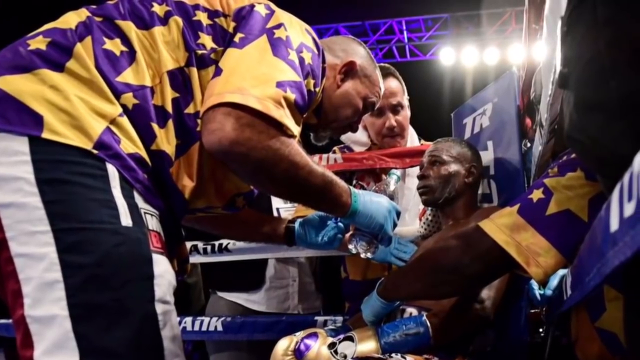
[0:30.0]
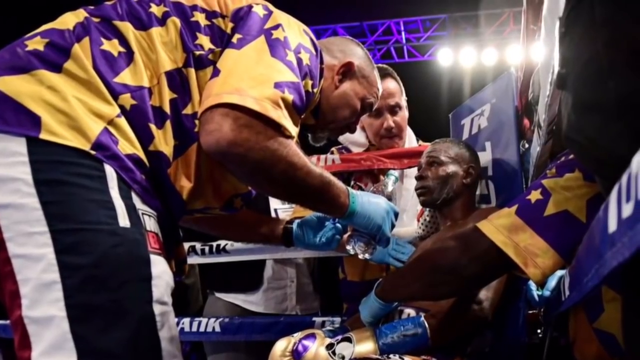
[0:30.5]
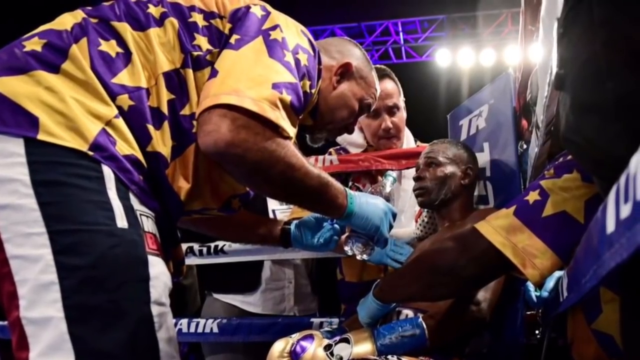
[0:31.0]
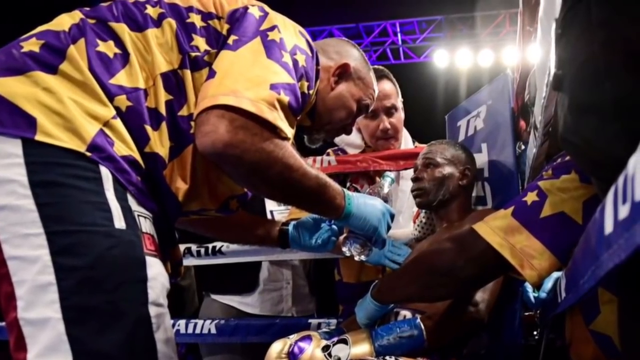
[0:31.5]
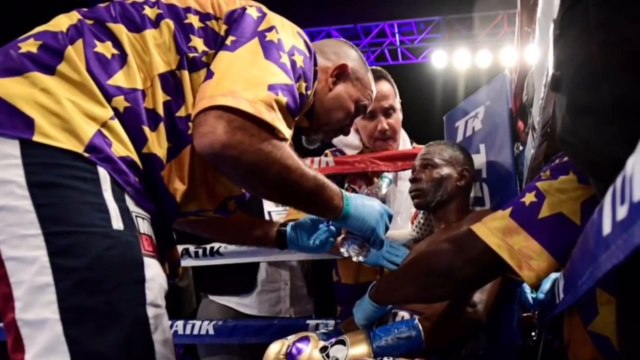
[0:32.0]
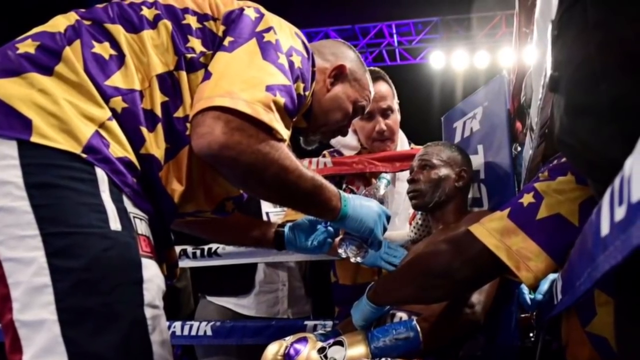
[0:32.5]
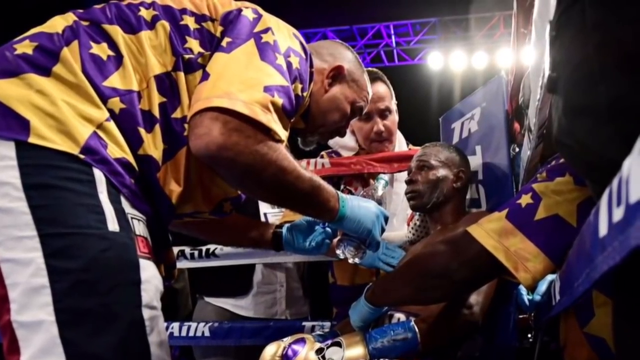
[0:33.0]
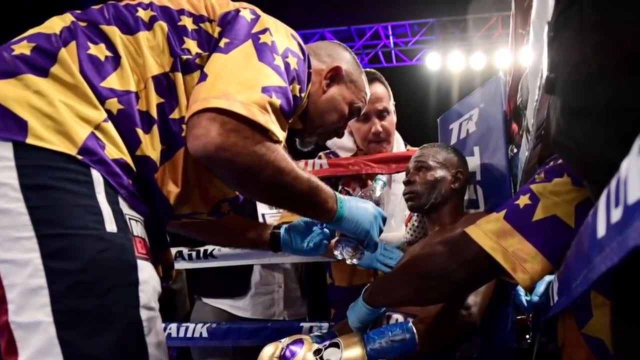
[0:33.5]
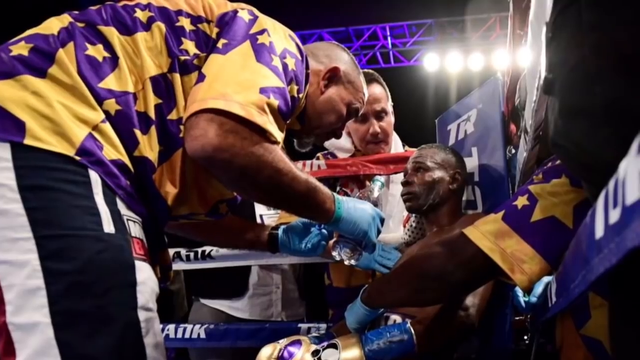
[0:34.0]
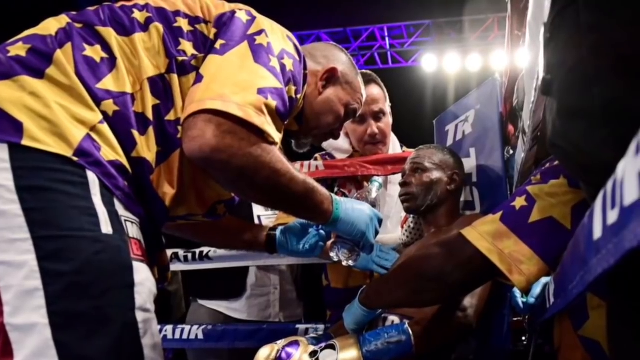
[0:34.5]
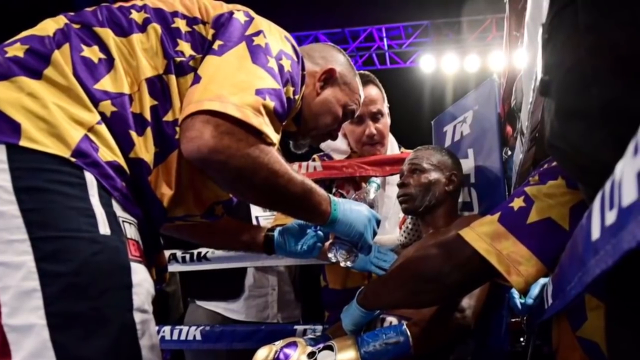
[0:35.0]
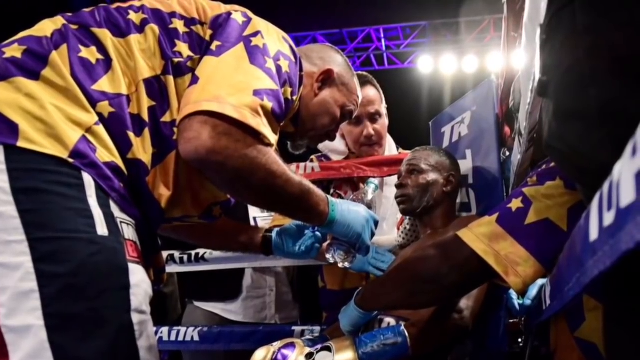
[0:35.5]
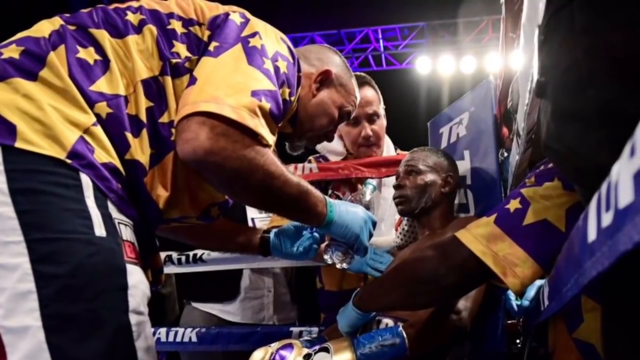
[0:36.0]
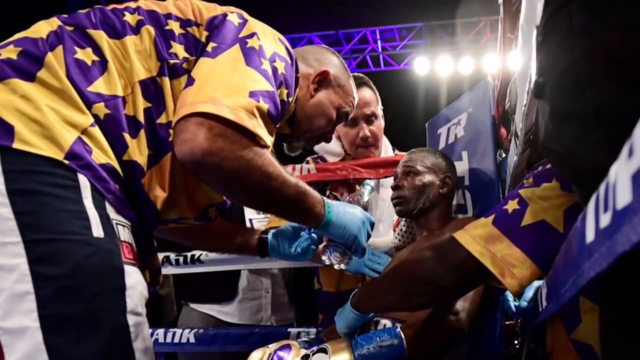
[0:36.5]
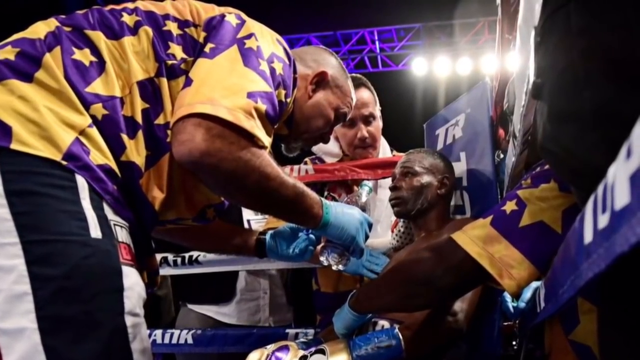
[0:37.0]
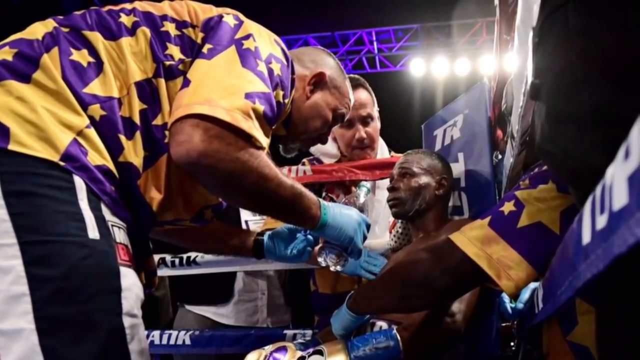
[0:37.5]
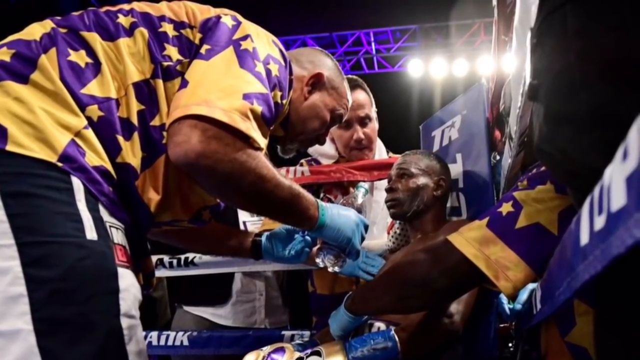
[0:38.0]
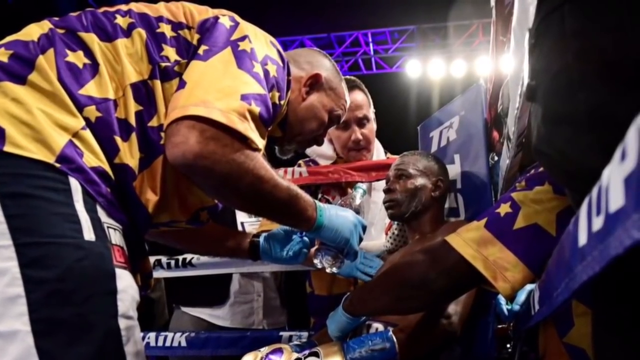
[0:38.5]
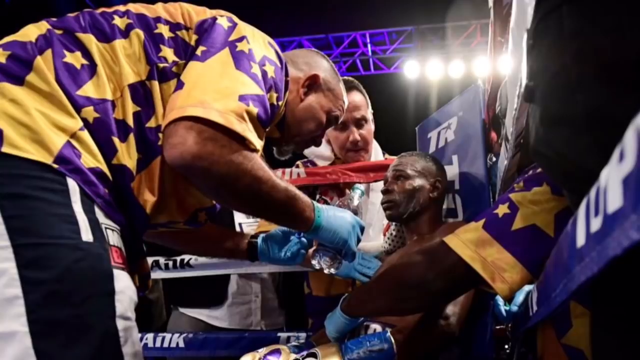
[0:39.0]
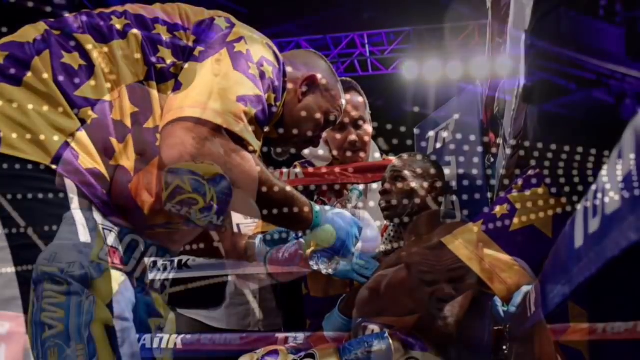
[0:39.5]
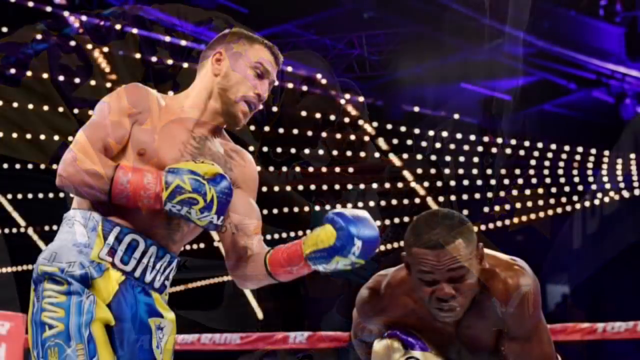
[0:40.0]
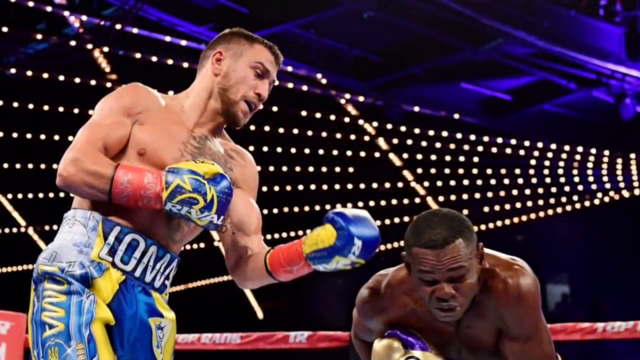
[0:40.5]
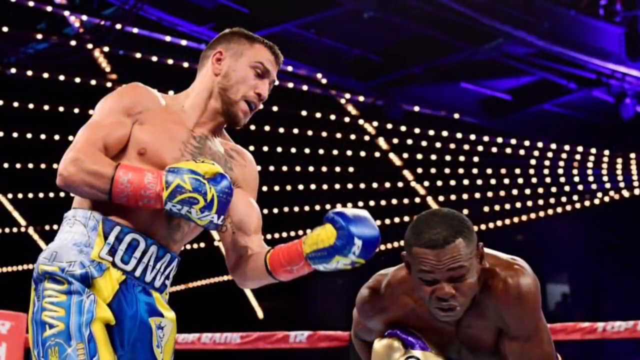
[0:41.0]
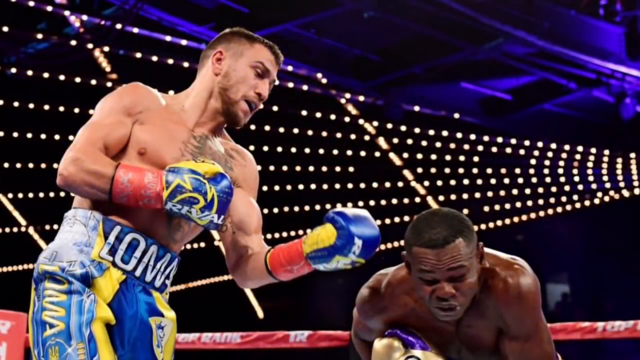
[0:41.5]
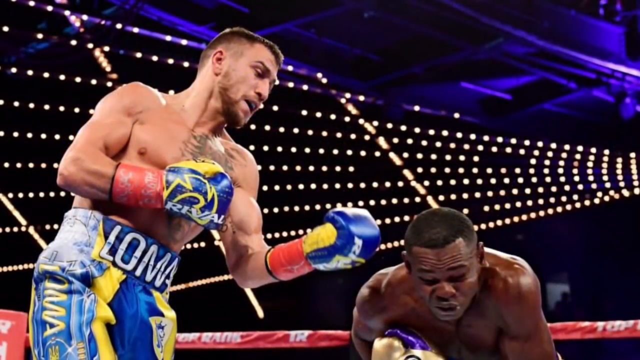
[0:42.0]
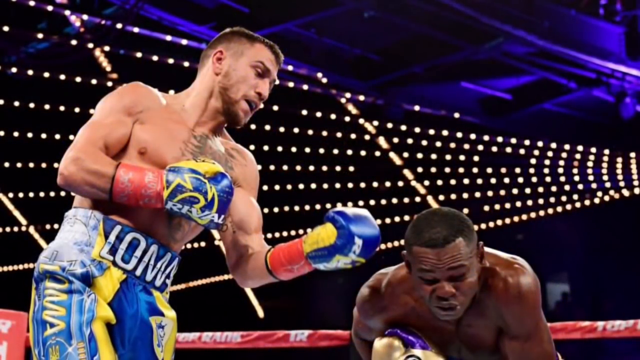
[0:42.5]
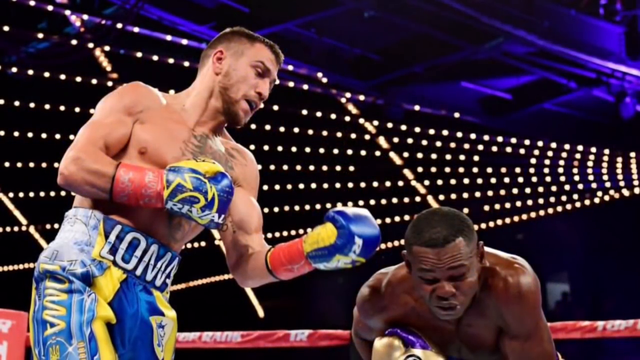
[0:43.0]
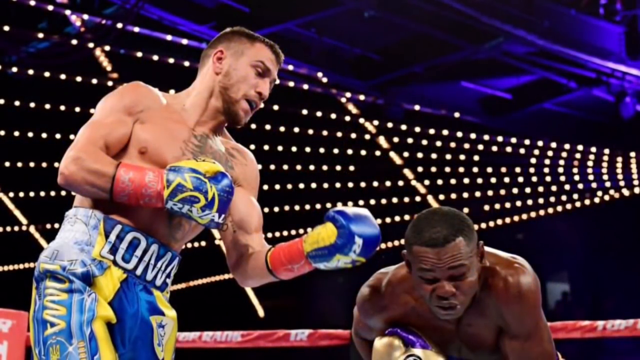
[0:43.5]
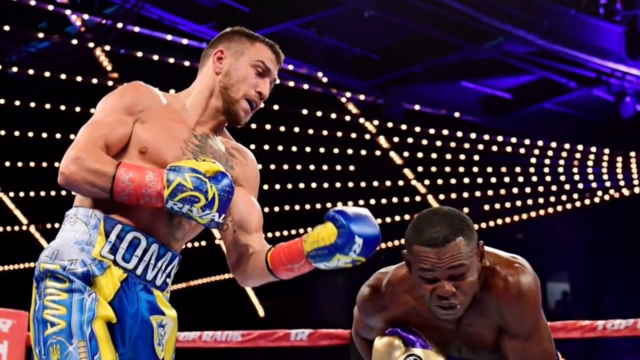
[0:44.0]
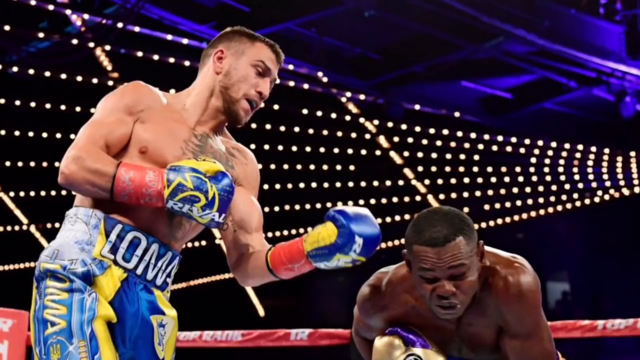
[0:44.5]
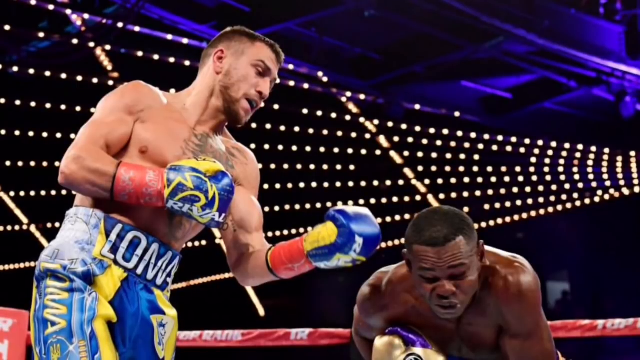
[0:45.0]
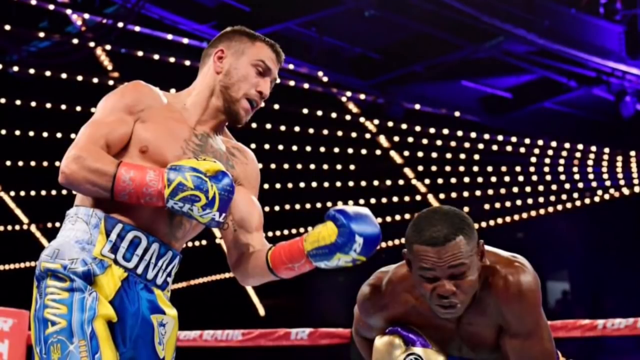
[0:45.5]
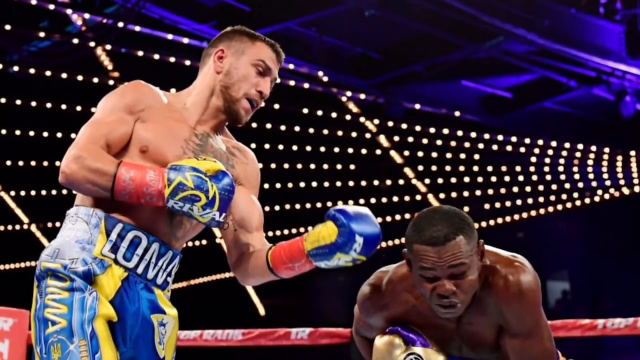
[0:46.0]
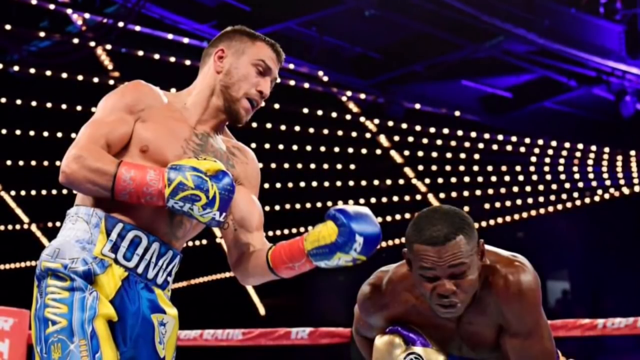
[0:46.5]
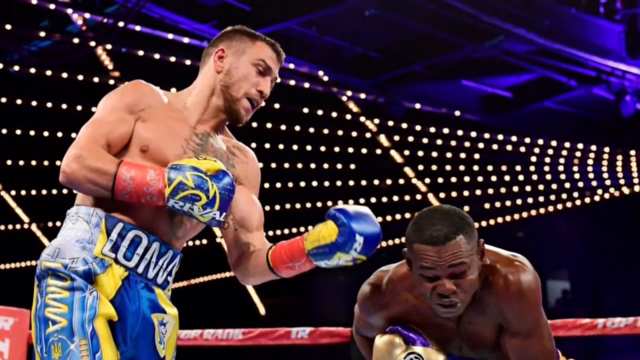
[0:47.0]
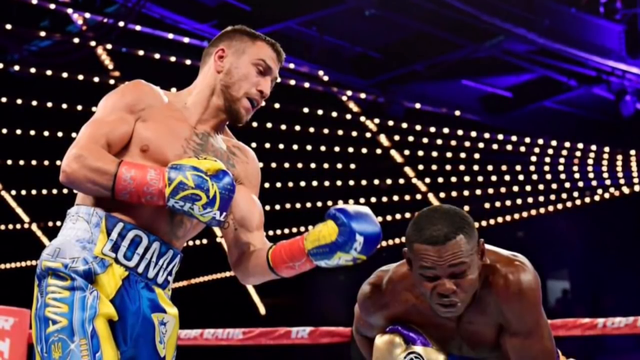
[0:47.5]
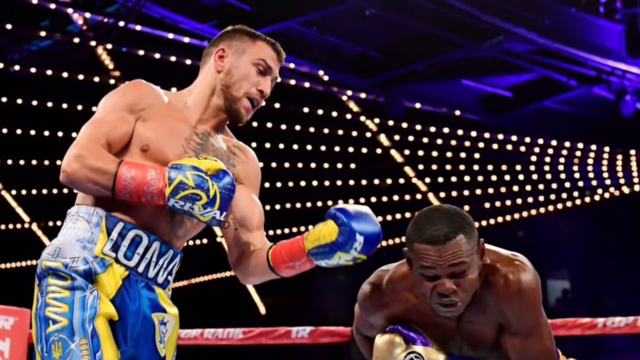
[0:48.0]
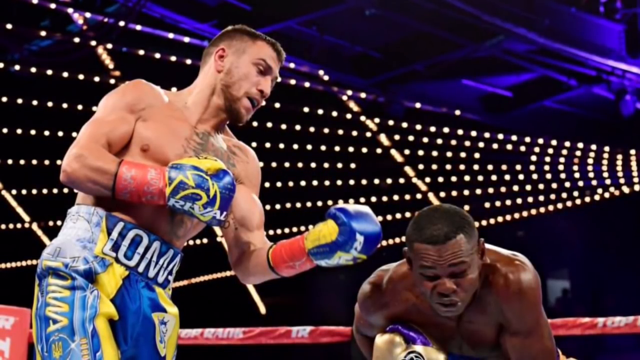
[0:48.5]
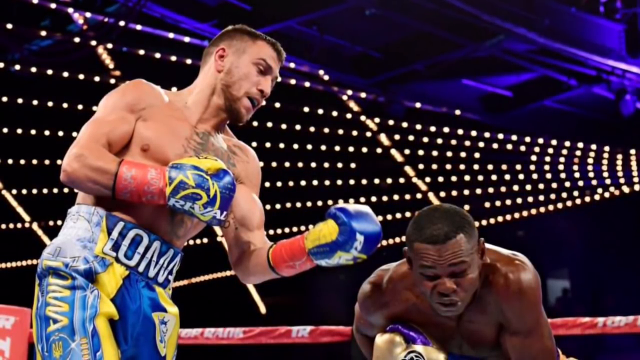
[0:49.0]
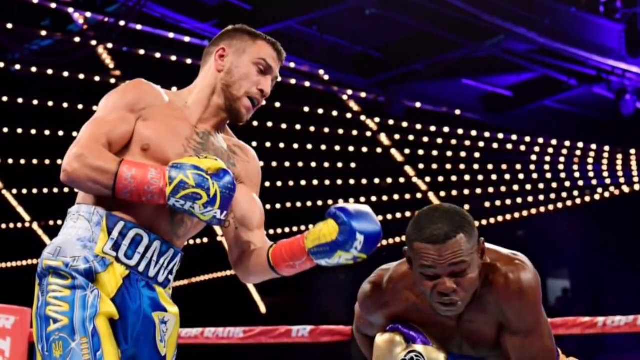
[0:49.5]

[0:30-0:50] The boxer sits on the floor on the right-hand side of the screen. He is black, and behind him is some blue-like fabric with the letters "TR" on it. Two people on his left attend to him: one gives him water, while the other sort of stands at his side, peeping over the edge of the ring and looking at him. The person attending him has very short gray hair and wears a yellow shirt with indistinct purple patterns containing yellow stars, along with black and white trousers or shorts that appear to be sponsored, possibly by mansion bet. The image stays on screen briefly as the camera slowly pans from left to right. Next comes an image of a boxer who has seemingly hit the person on the right. The boxer on the left has short brown hair, a thin, angled face and a beard. He wears blue and yellow gloves with a red wrist strap around the bottom of each glove, and blue and yellow shorts with the word "Loma" across the belt. The man on the right, who has been hit, is a black man with very short black hair. In the background are lots of little circular white lights.